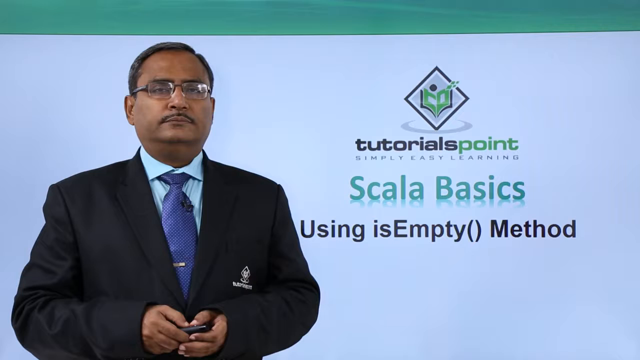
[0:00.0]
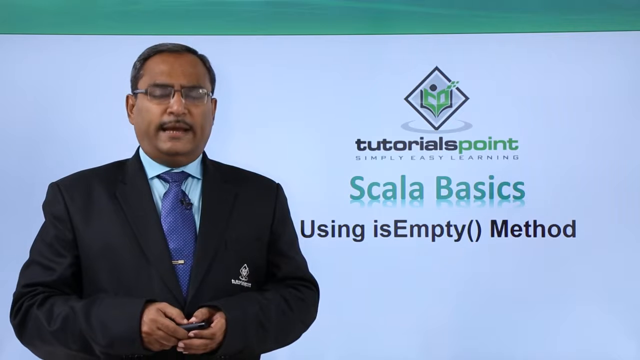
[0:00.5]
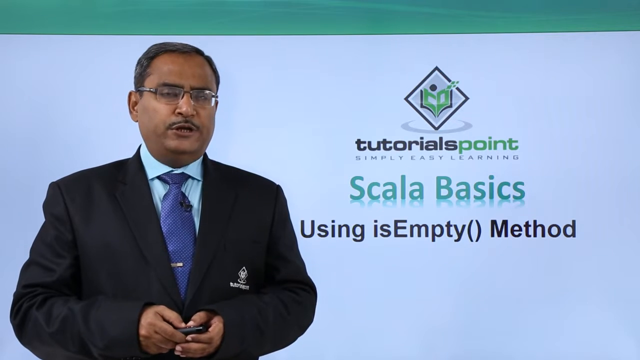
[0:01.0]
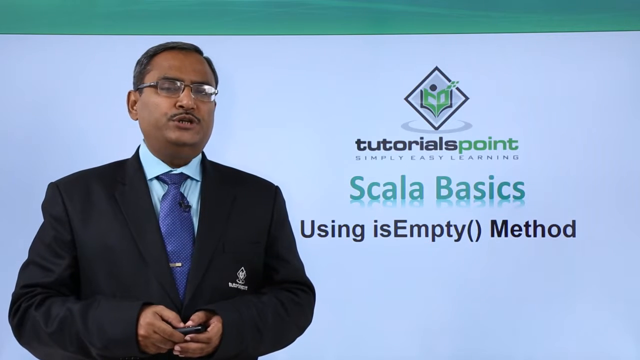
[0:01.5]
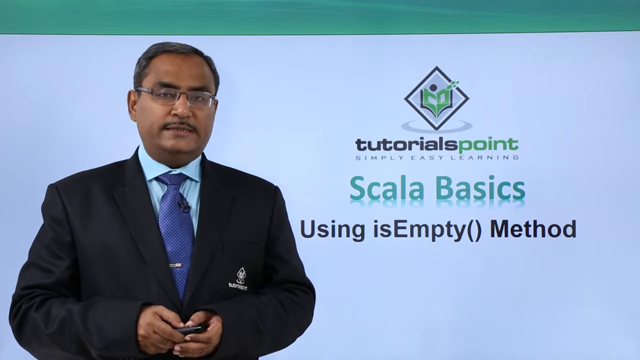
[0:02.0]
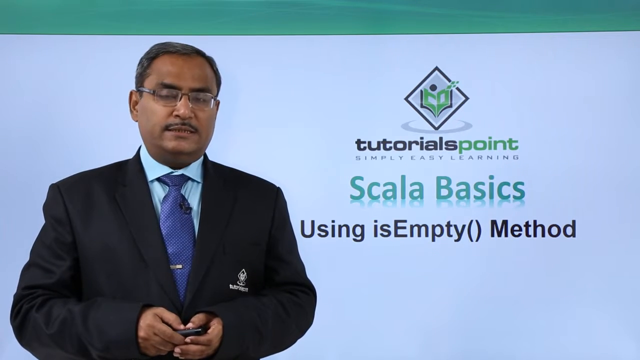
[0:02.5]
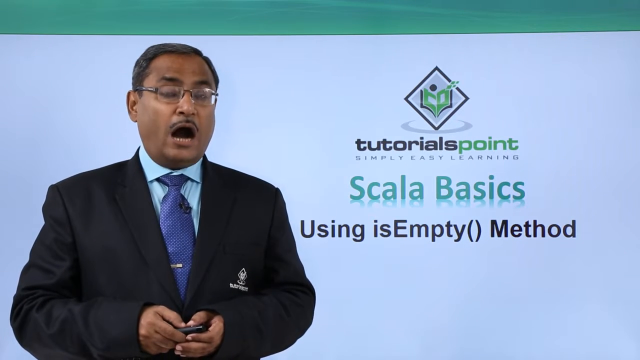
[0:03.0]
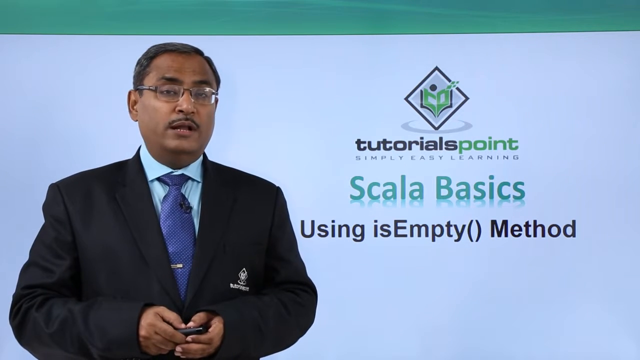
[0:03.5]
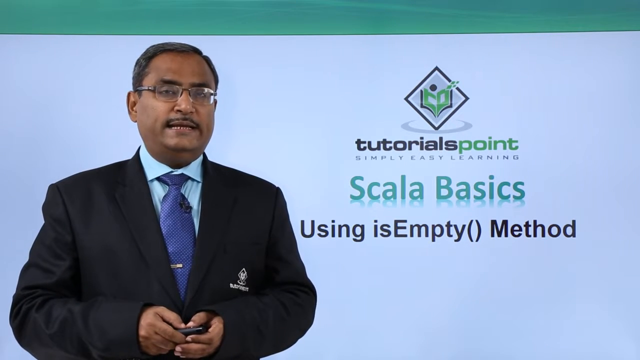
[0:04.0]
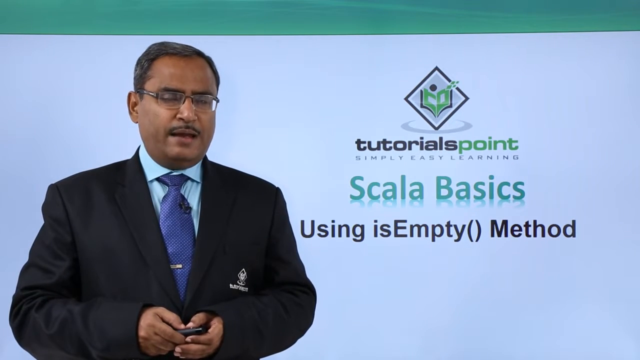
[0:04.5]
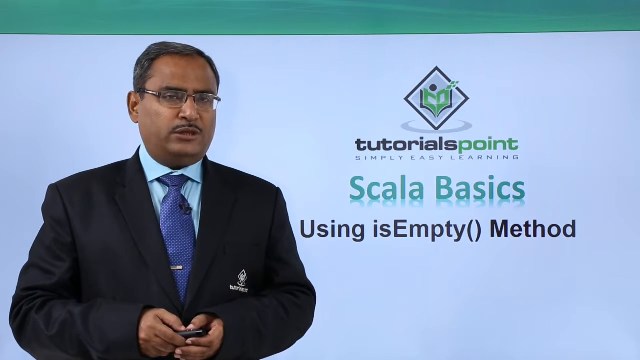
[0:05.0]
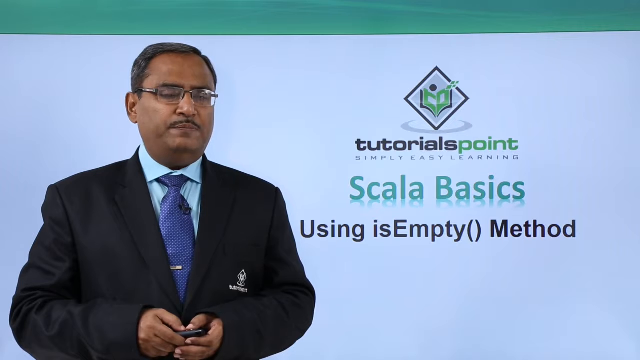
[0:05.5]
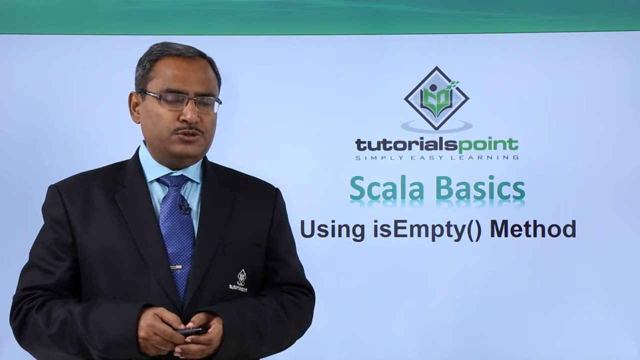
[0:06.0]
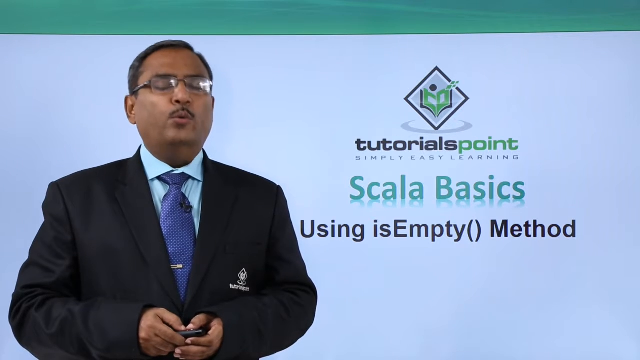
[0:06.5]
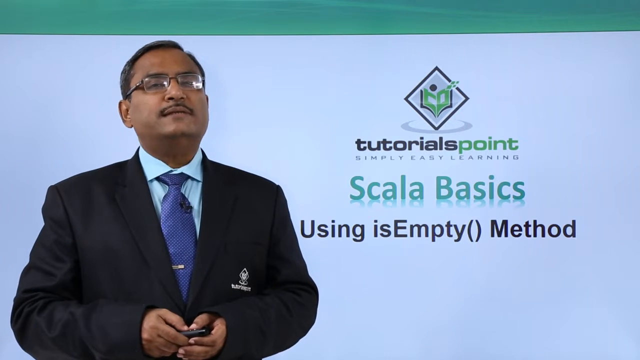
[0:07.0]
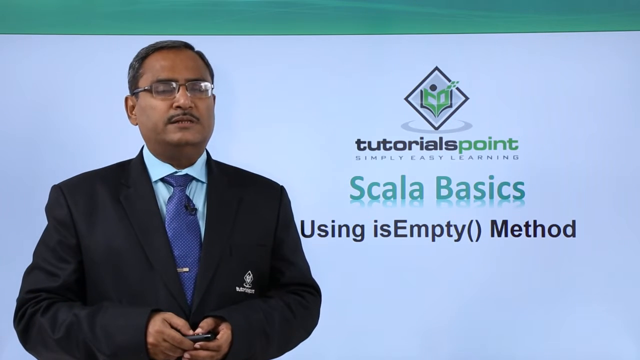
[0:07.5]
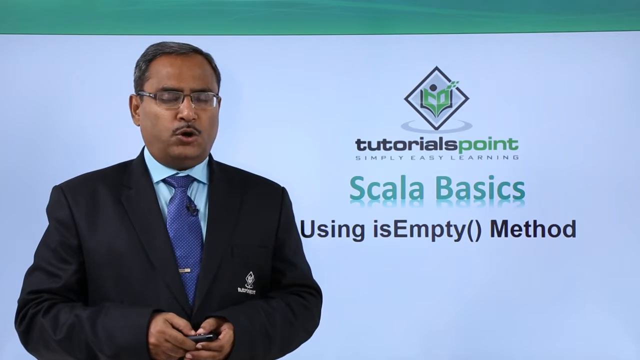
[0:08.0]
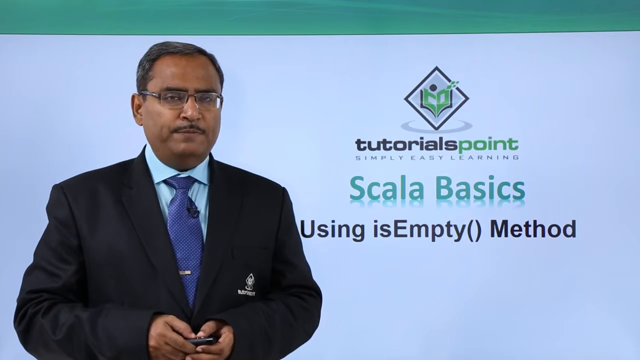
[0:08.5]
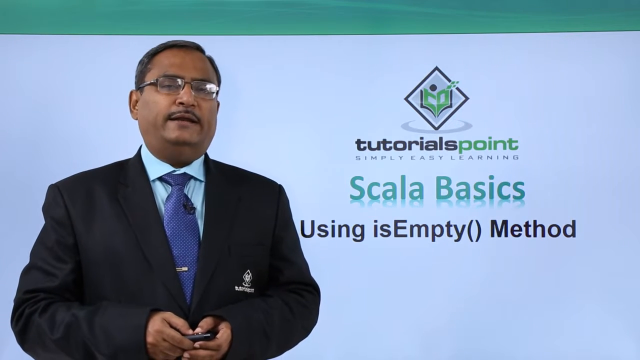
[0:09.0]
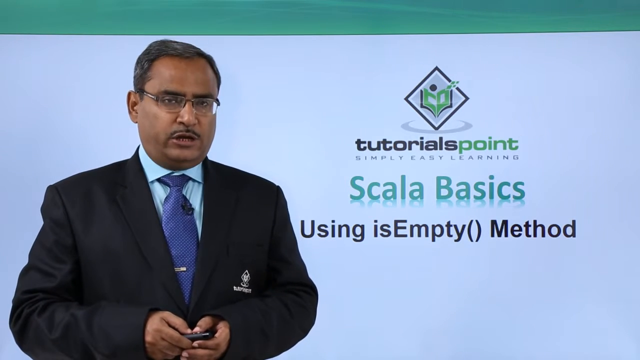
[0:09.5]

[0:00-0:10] The video opens with a Tutorials Point logo on the right side and the text "Scala basics using is empty method"; it seems to be some type of math tutorial. On the left, a man is talking. He wears a dark suit, a blue tie and a light blue dress shirt underneath, and there is a patch or insignia on the pocket of his suit coat. In his hands he appears to hold a small device, possibly a pointer, either a laser pointer or a remote control. The background is light blue. The Tutorials Point logo is in the upper right of the screen, with the tagline "simply easy learning".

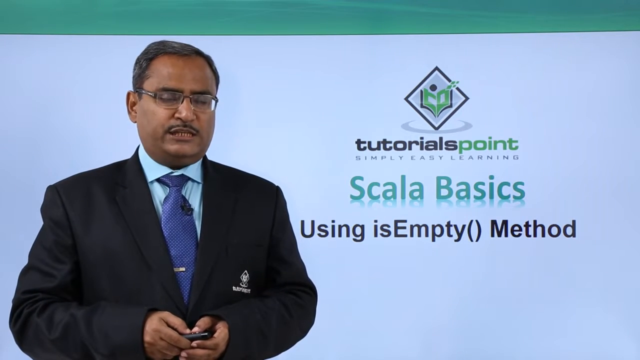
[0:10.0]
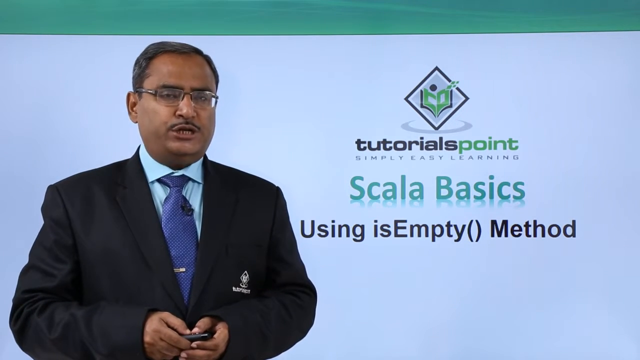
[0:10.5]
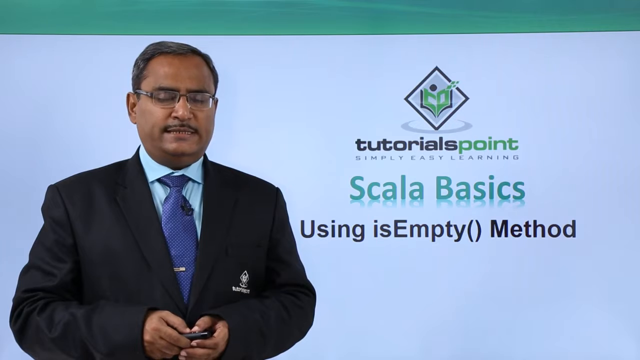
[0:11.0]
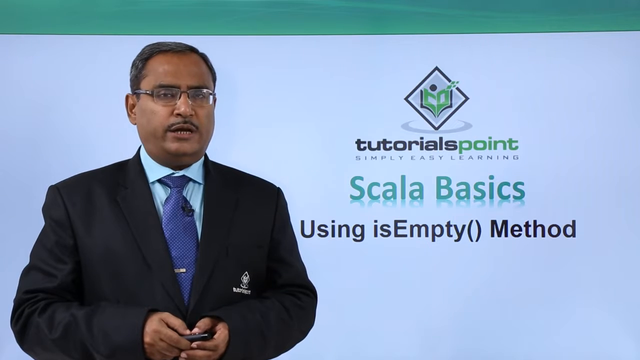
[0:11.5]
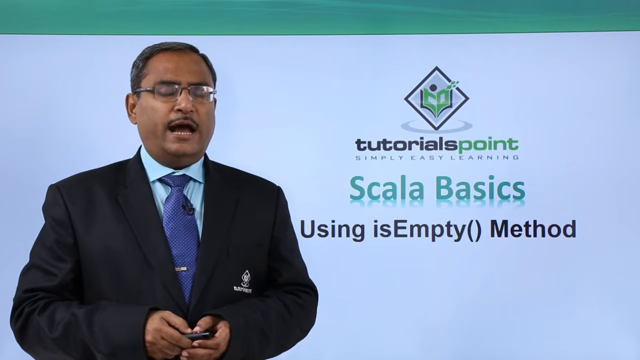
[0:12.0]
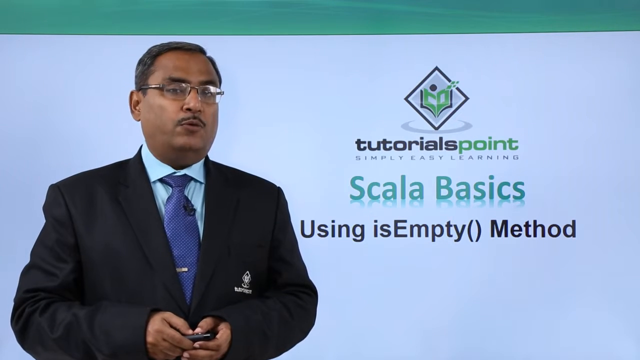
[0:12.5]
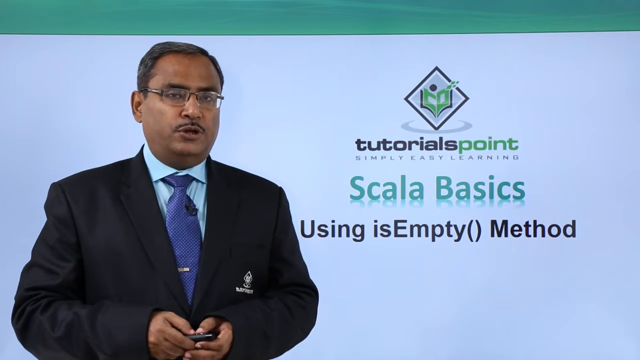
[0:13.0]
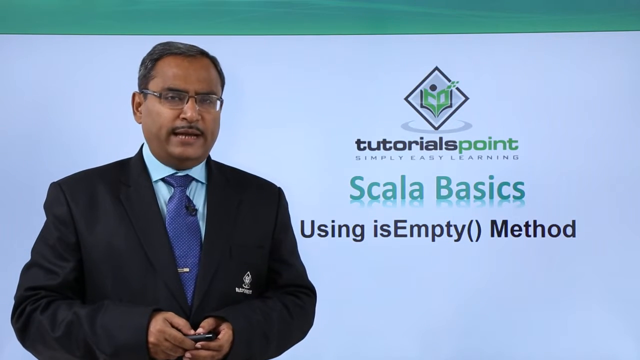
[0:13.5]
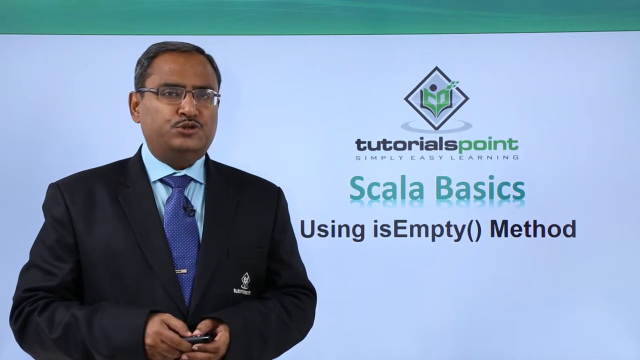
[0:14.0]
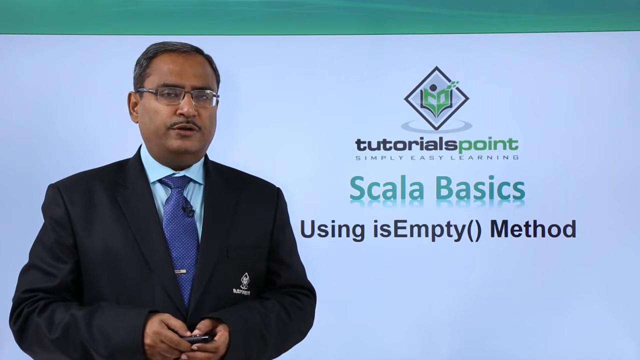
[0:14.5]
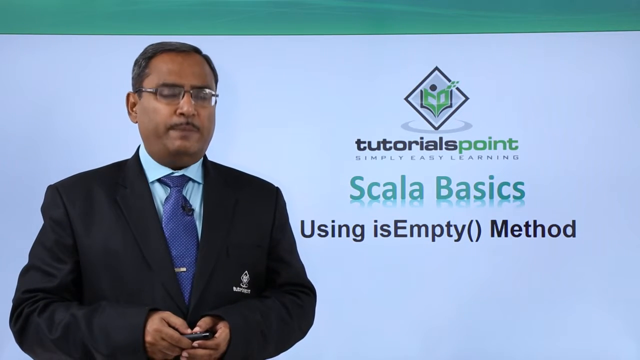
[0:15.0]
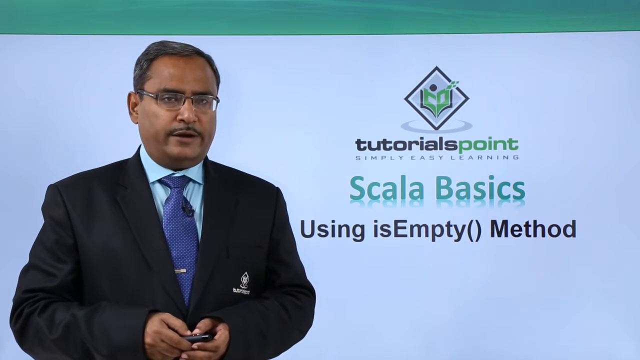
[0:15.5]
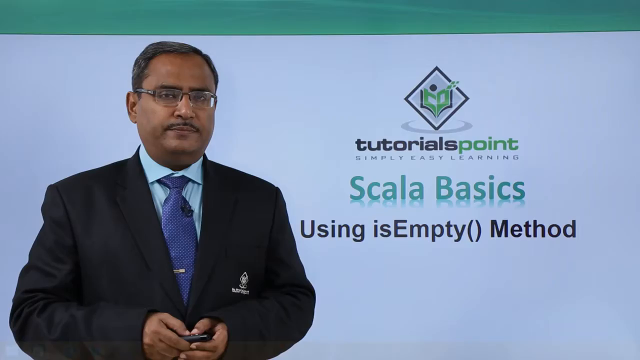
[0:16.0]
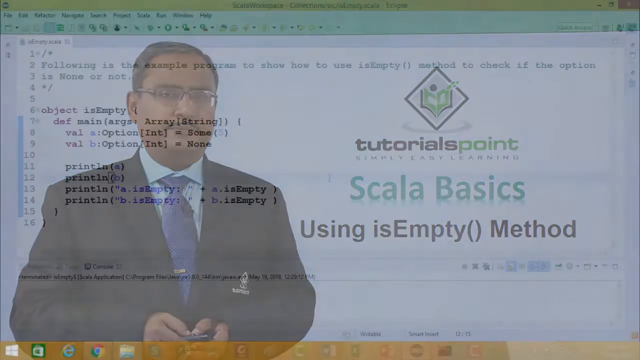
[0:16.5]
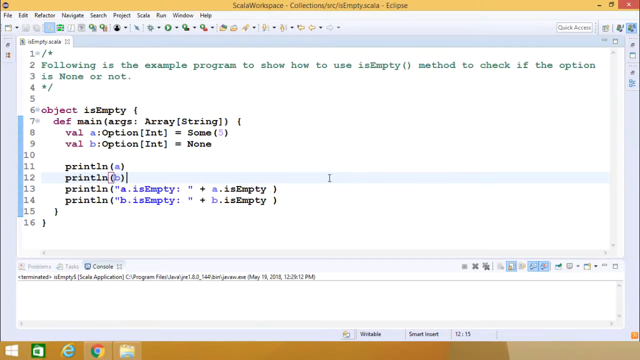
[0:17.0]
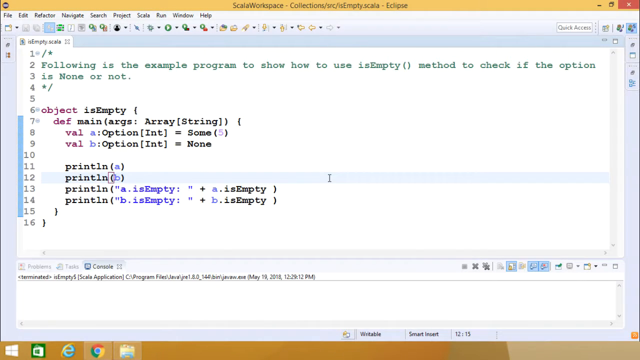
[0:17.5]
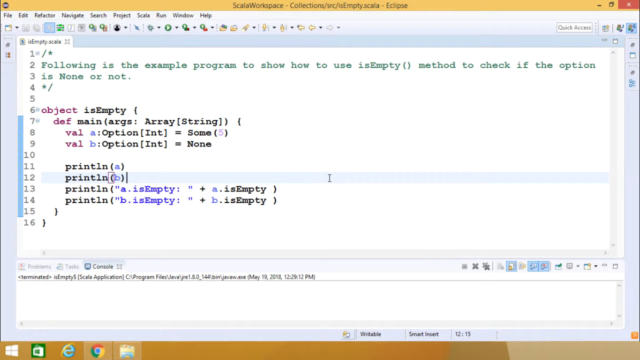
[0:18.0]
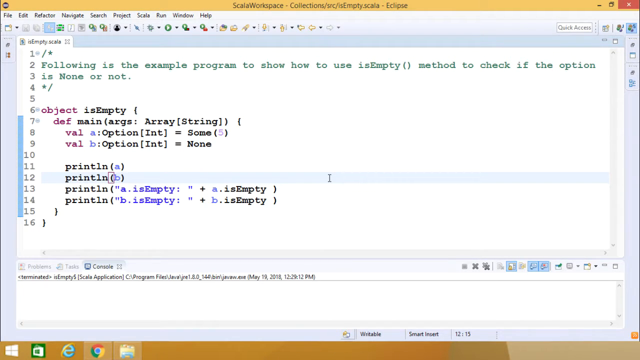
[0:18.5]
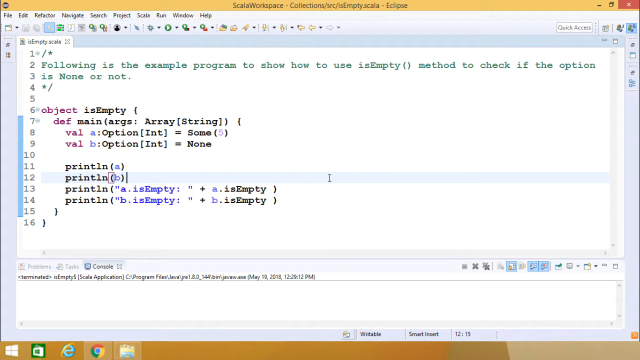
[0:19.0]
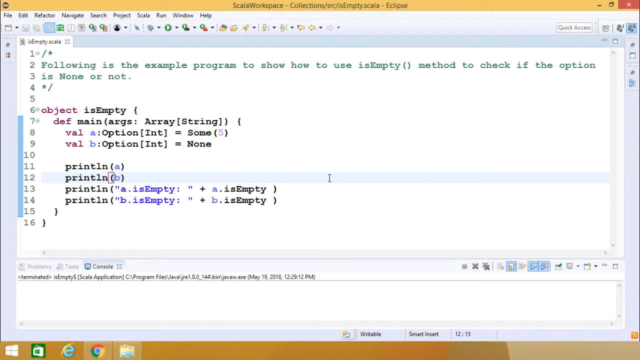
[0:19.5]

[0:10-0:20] A man is on the left side of the screen, talking, and a Tutorials Point logo is in the upper right portion with the tagline "simply easy learning". Underneath it, the text reads "Scala basics, using is empty method". The man wears a dark suit coat, a blue tie and a white-blue shirt. The view then switches to a text editor with code in it. The title at the top of the editor is "Scala Workplace Collections", and the usual file and edit menus are in the top left. One tab is open, containing a lot of code. Text in it says "Following is the example program to show how to use is empty method to check if the option is none or not." Many of the code lines begin with "printIn".